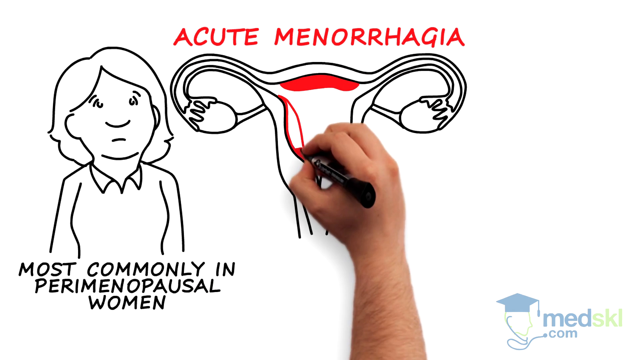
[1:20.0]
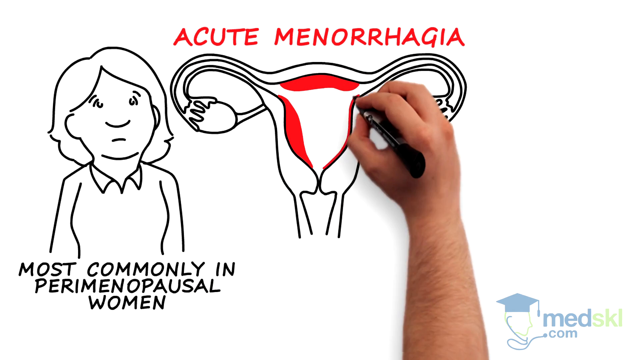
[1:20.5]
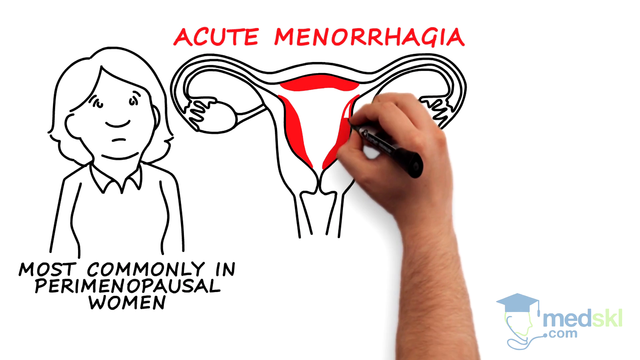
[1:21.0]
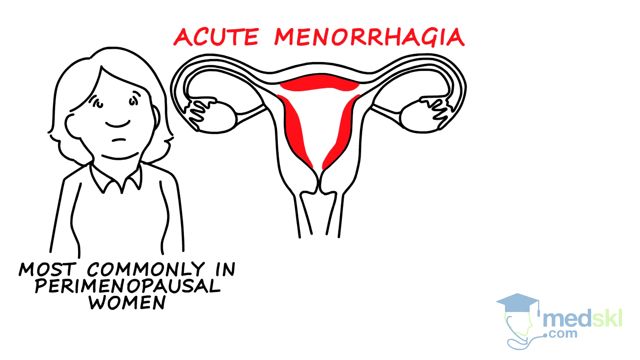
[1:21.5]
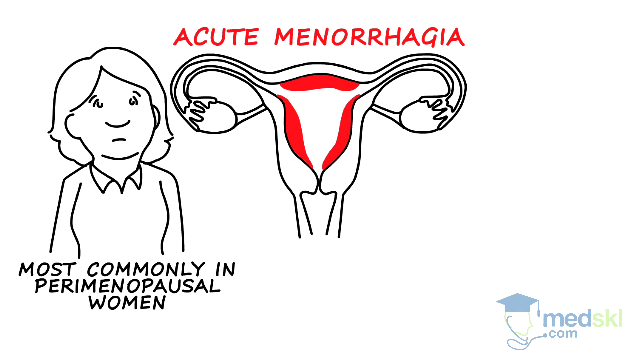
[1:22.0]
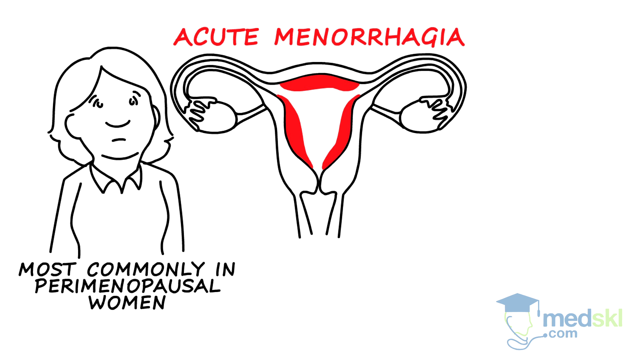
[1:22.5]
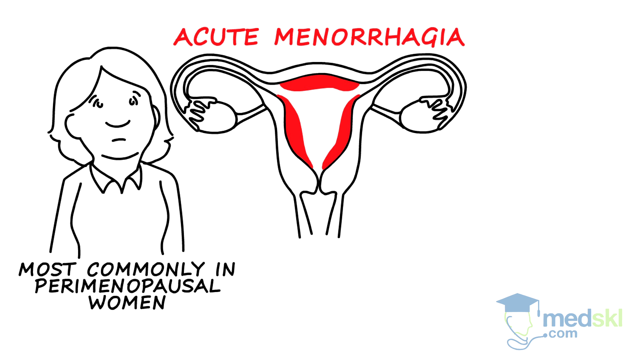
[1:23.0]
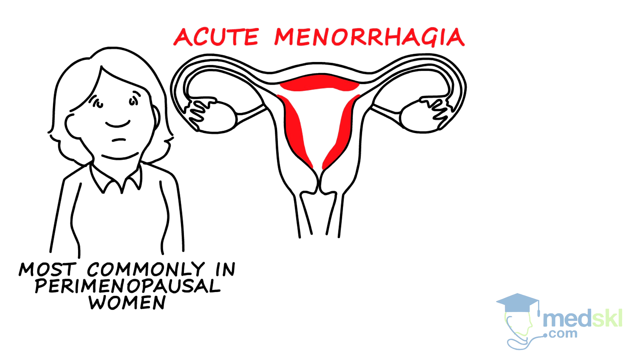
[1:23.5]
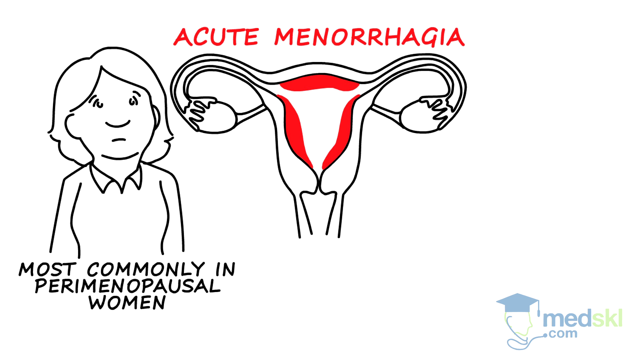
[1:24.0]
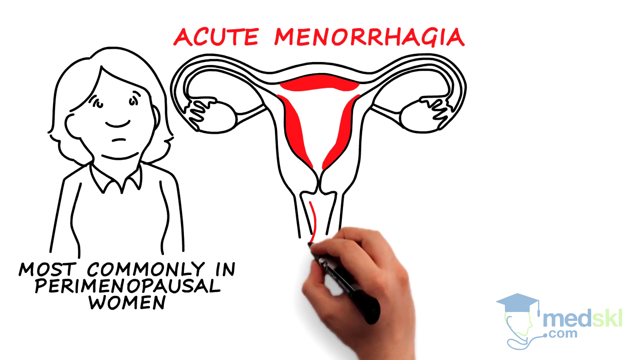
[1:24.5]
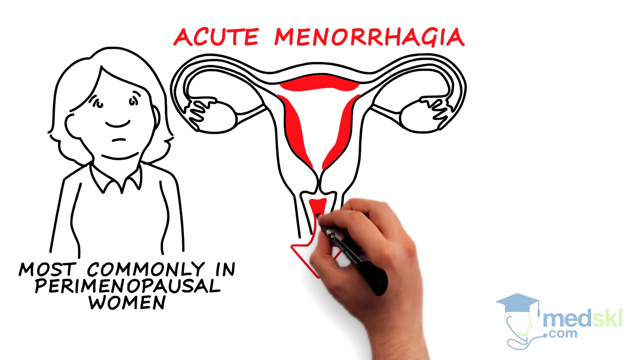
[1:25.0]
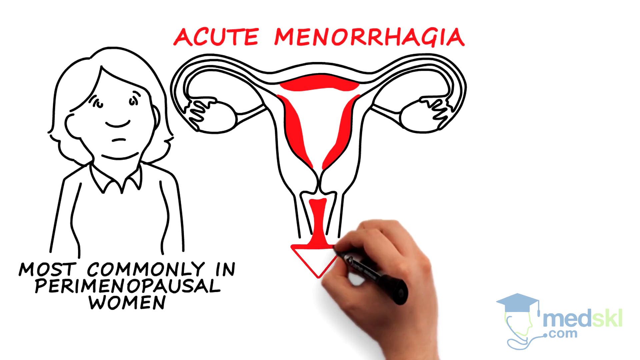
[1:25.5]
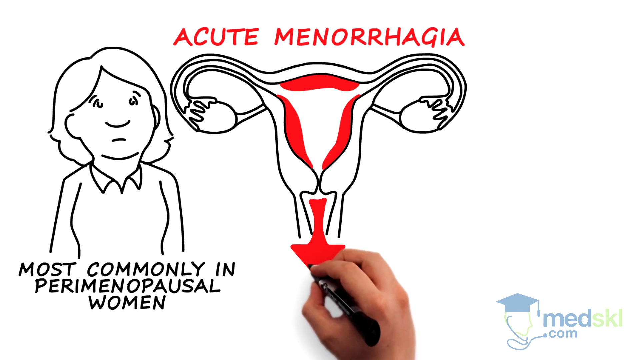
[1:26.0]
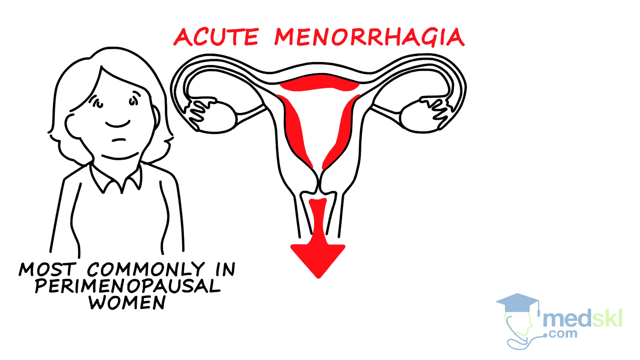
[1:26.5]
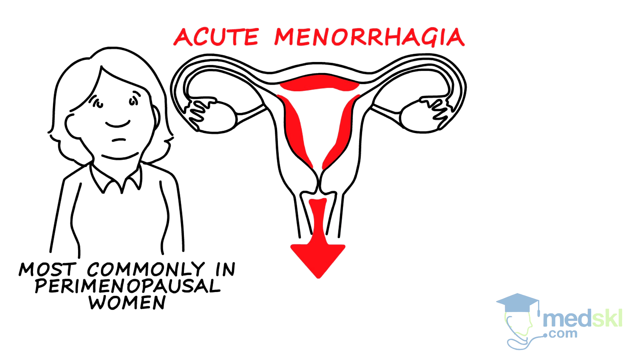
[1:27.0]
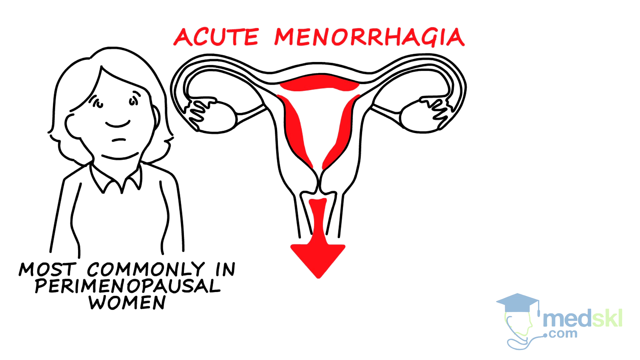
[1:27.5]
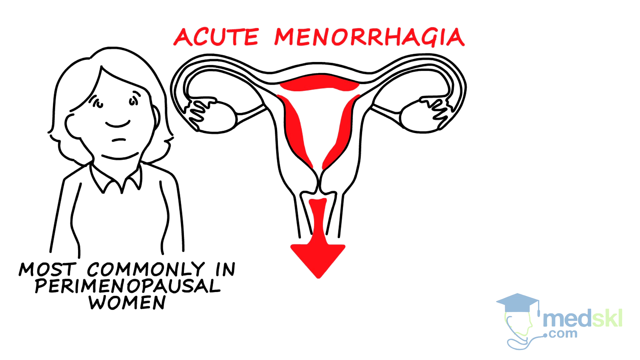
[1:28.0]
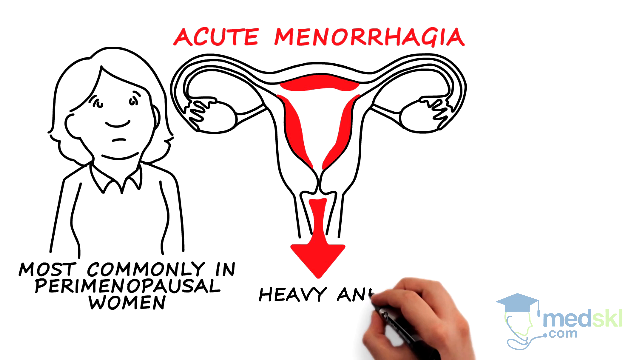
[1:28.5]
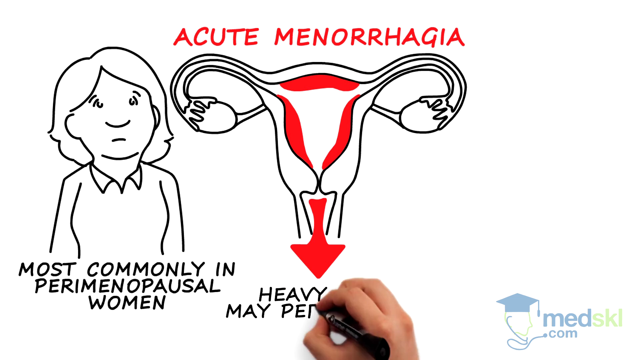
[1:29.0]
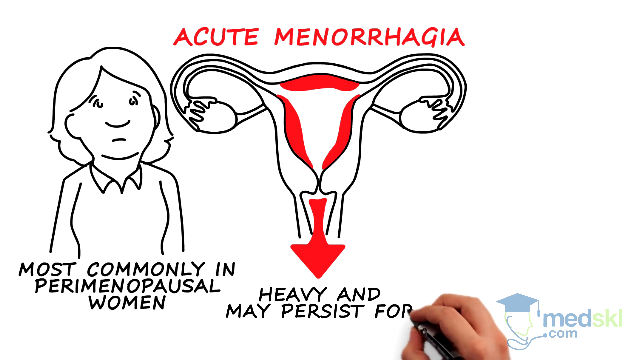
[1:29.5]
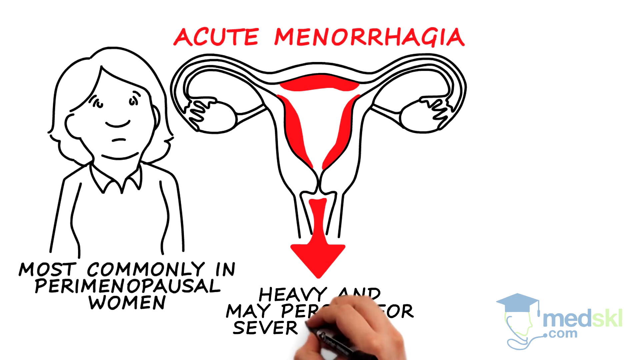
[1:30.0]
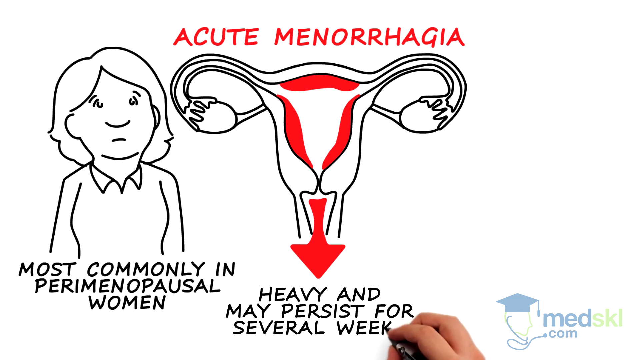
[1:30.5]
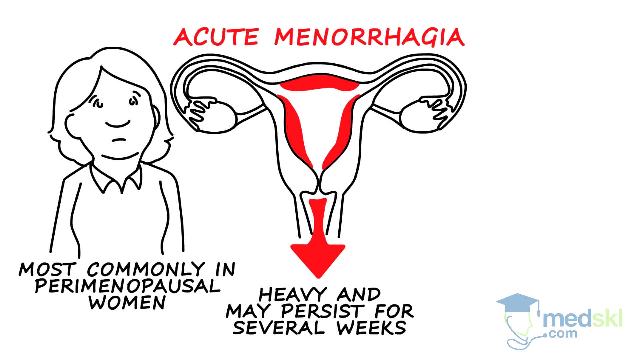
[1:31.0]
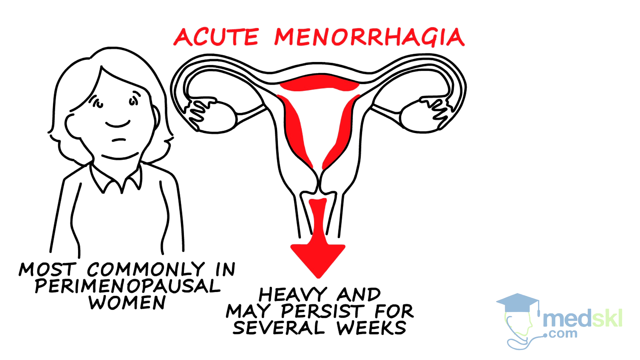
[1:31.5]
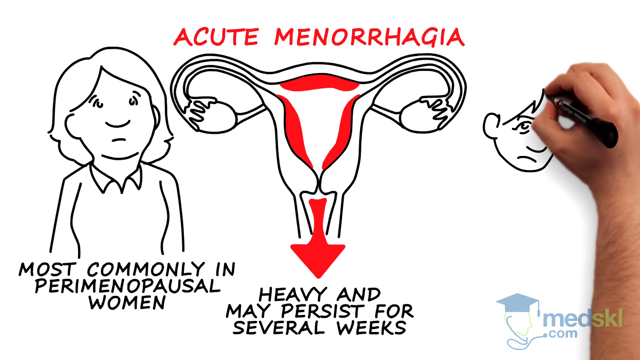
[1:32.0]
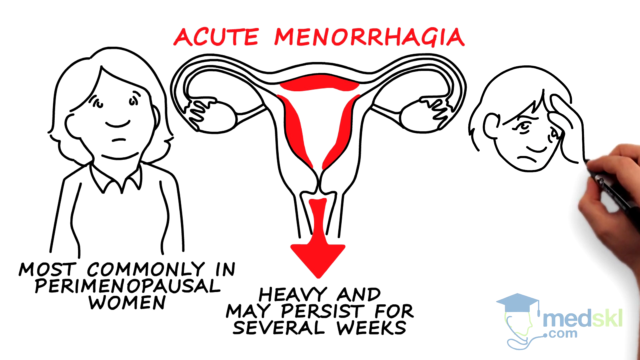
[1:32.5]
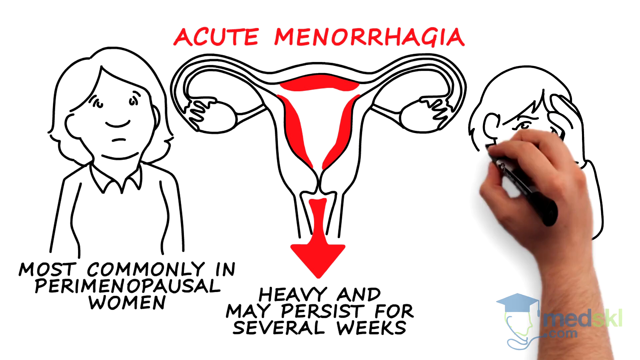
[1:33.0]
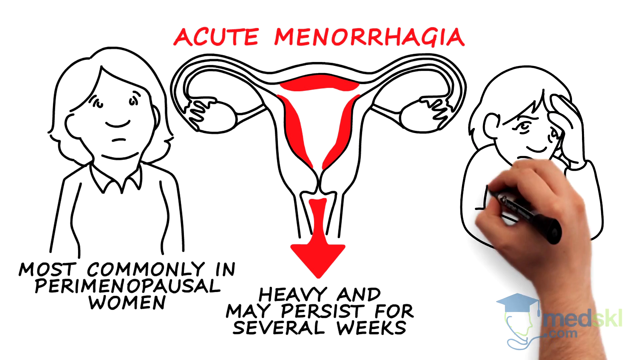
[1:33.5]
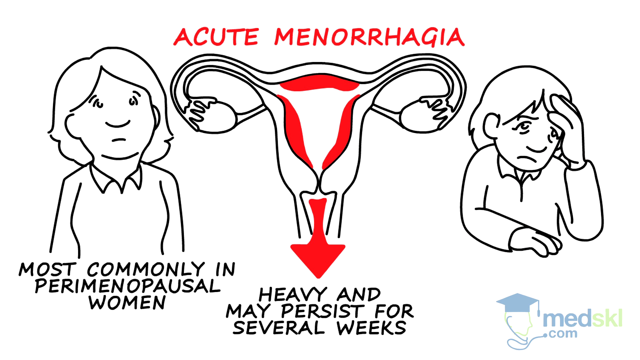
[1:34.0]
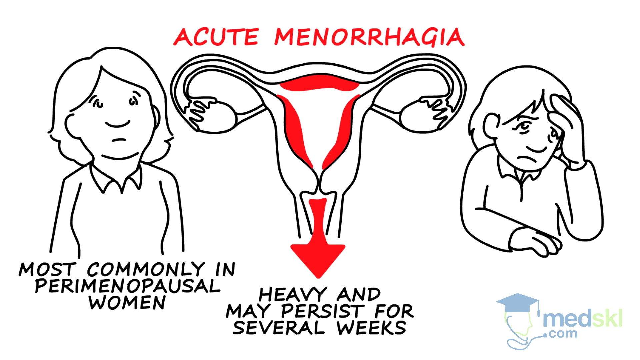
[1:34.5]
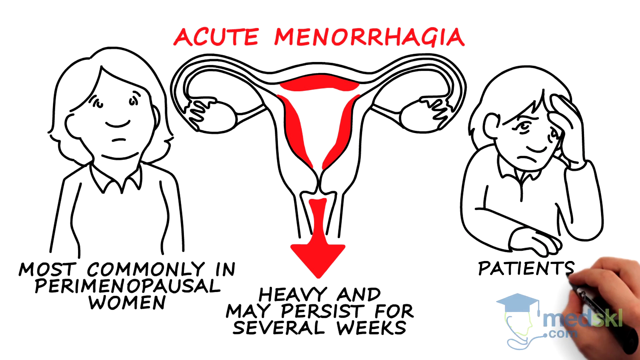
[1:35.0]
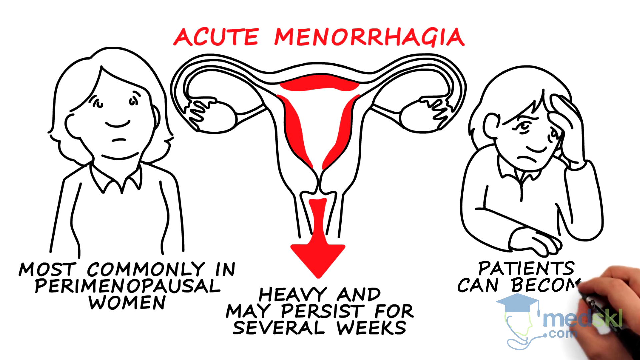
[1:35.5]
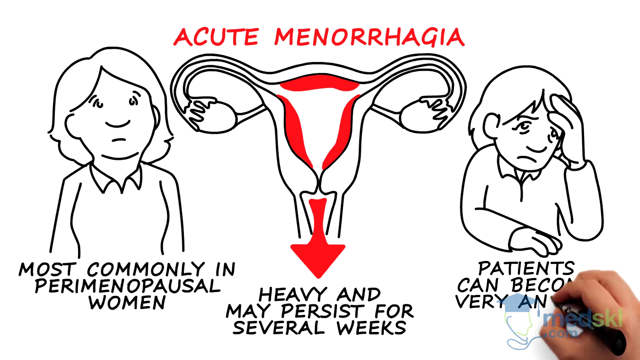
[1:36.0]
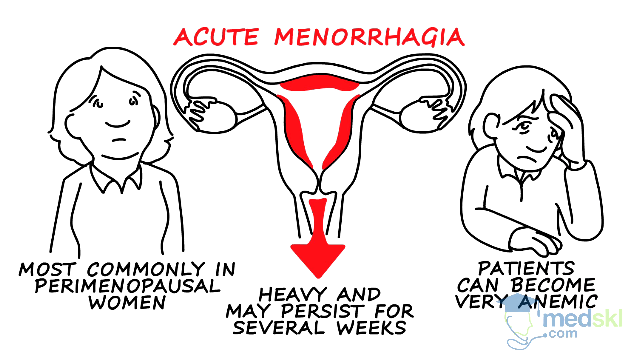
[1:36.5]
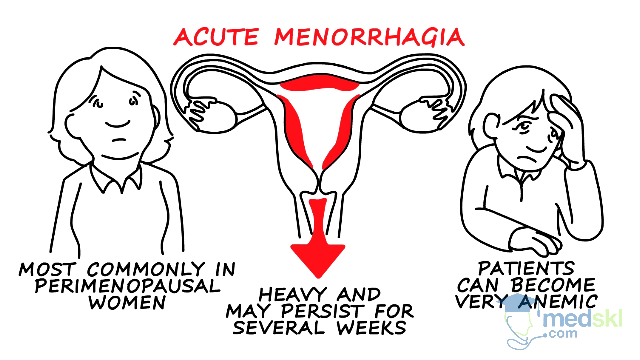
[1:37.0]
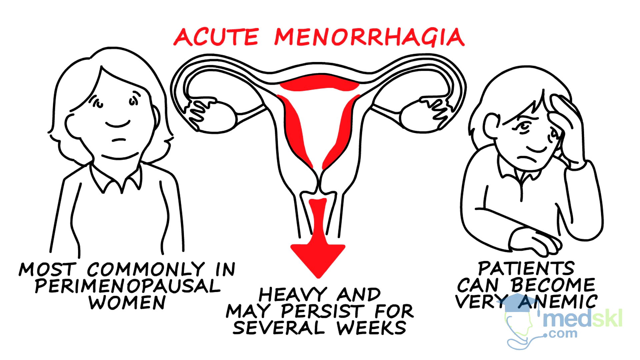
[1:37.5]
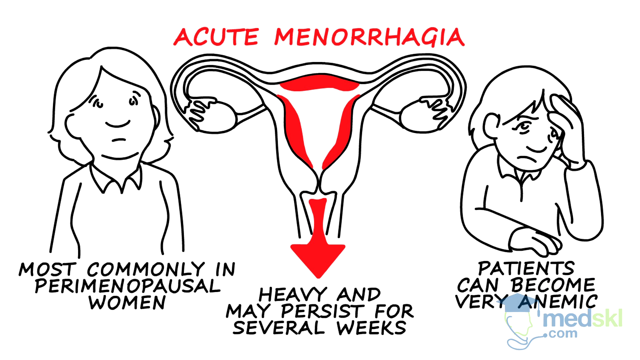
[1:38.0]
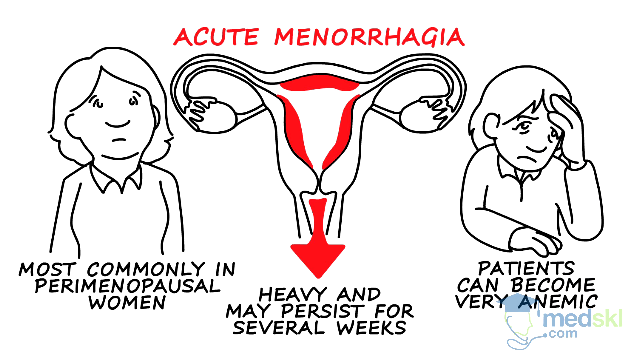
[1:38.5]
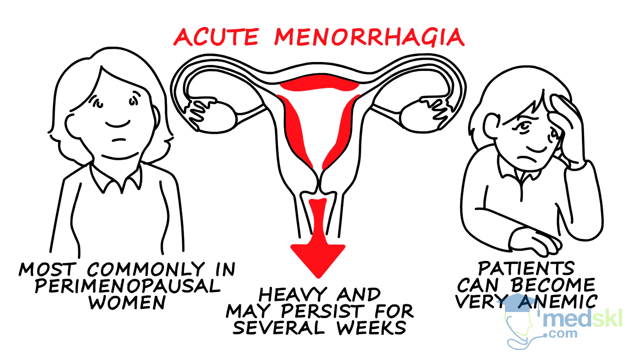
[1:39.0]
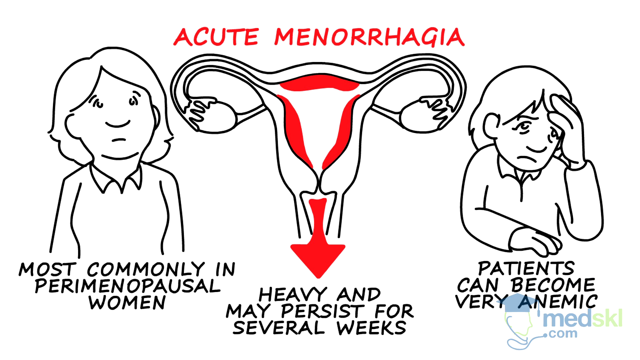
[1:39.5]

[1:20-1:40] The hand draws a uterus in the middle and colors its middle part red, three sections red to indicate blood. It draws a red arrow on the lower part of the uterus signaling the blood going through, and writes underneath the uterus "heavy and may persist for several weeks." The hand then draws a very worried, stressed-out woman with her left hand on her forehead, looking very tired, and writes below her "patients can become very anemic." The screen now shows a worried woman on the left, another worried woman on the right, and the uterus in the middle.